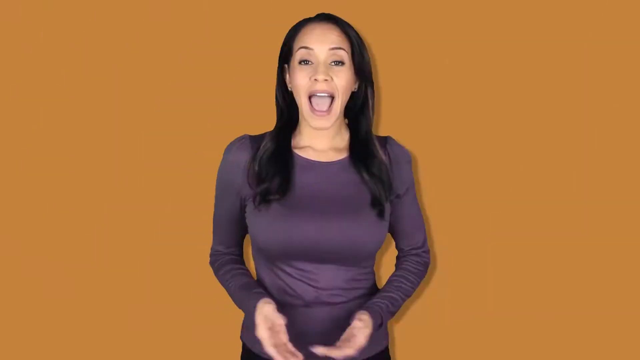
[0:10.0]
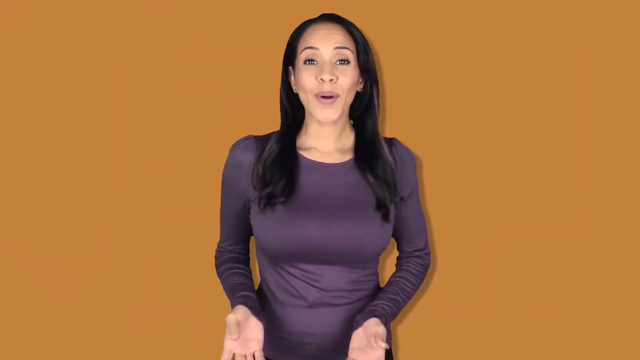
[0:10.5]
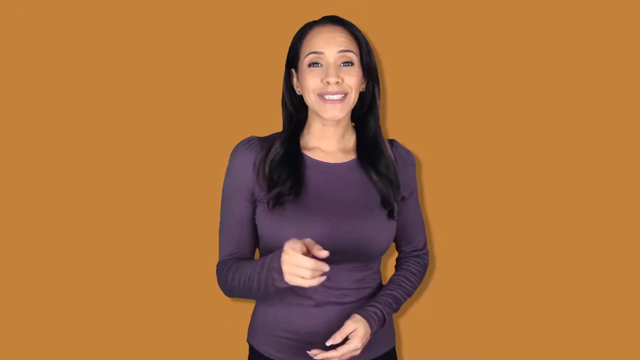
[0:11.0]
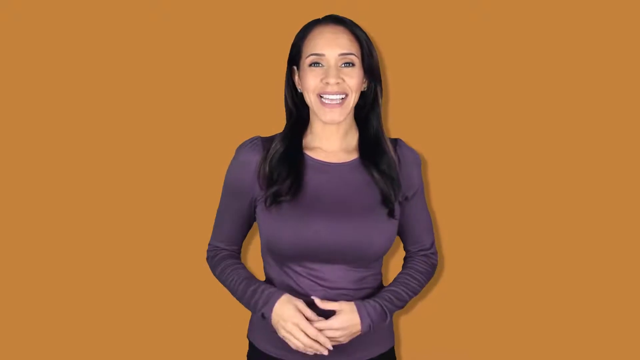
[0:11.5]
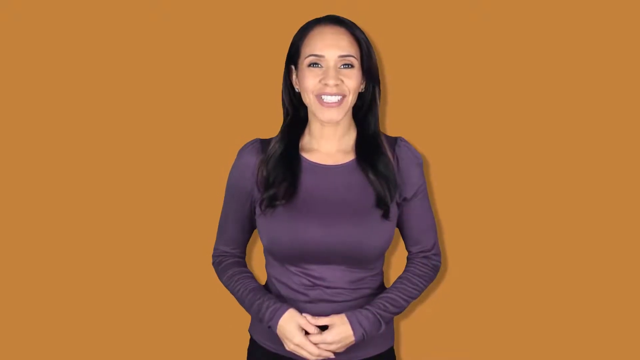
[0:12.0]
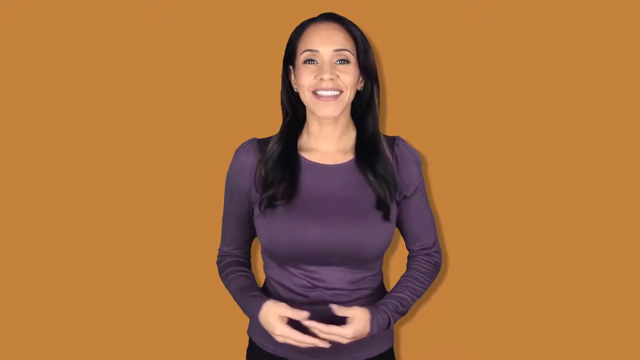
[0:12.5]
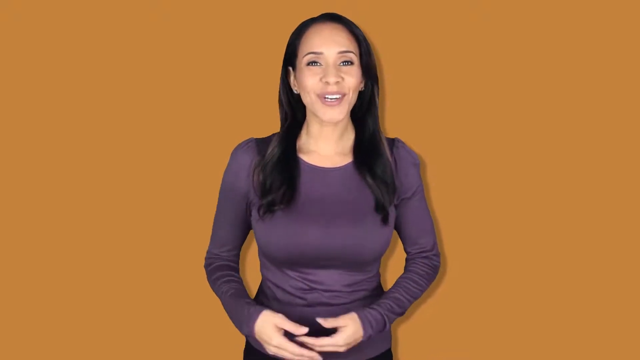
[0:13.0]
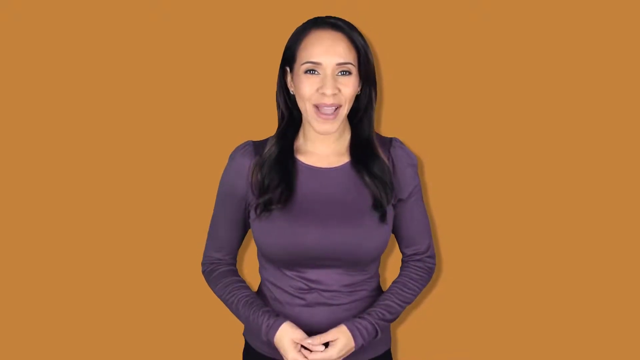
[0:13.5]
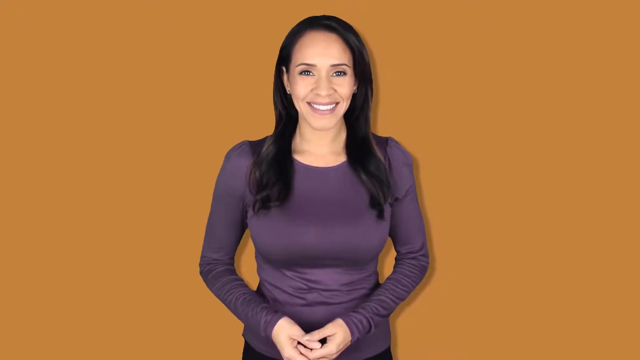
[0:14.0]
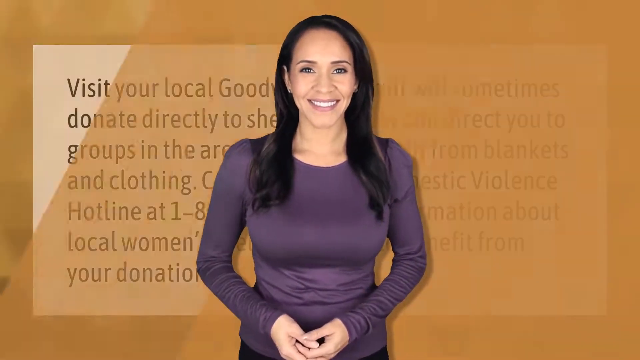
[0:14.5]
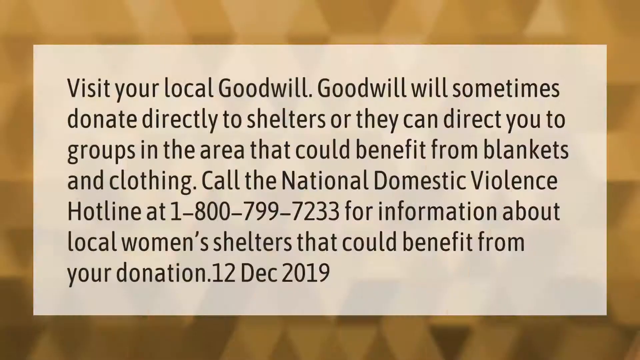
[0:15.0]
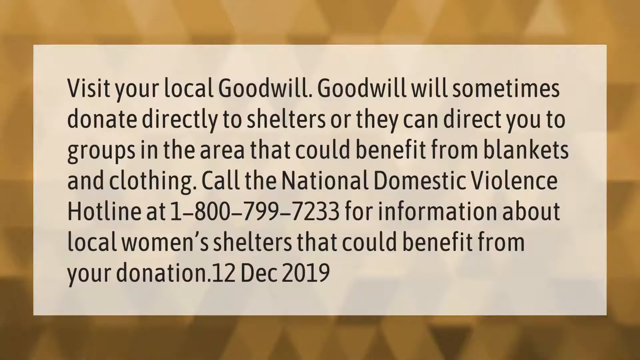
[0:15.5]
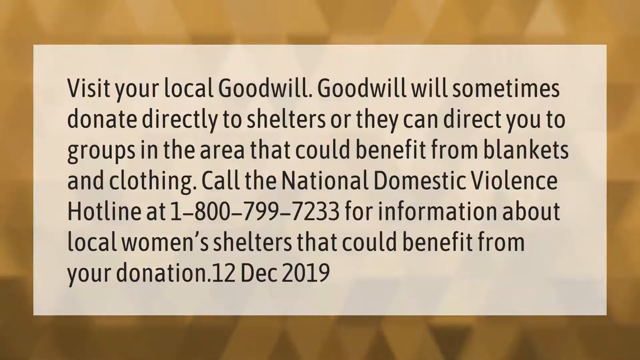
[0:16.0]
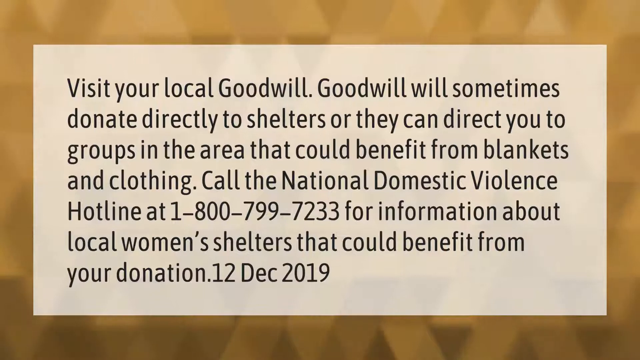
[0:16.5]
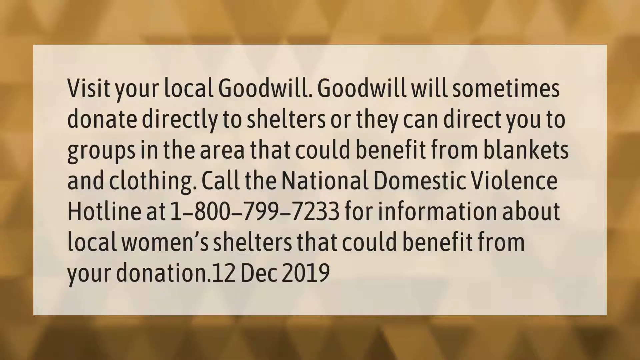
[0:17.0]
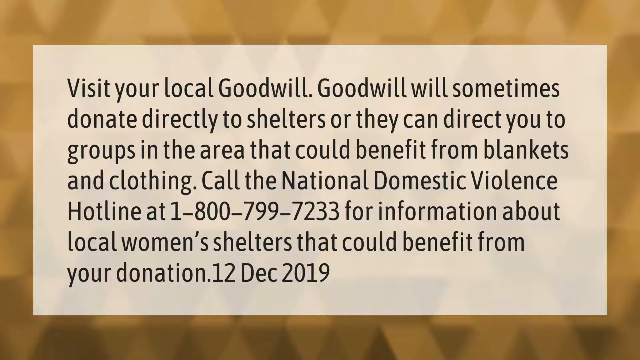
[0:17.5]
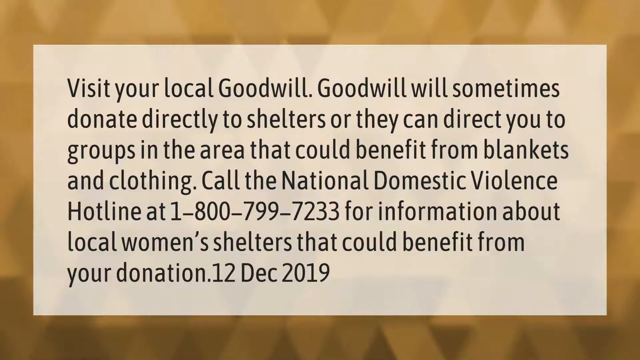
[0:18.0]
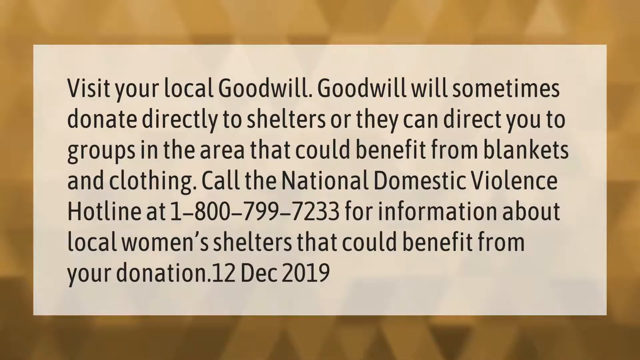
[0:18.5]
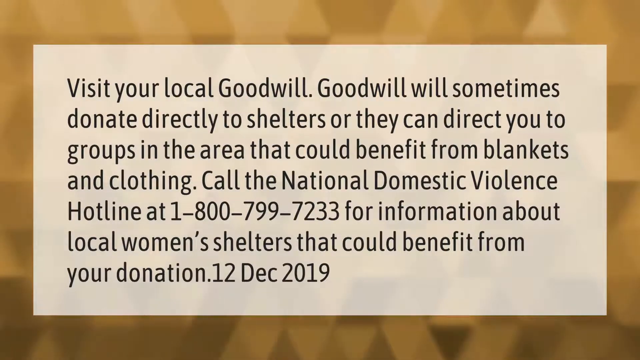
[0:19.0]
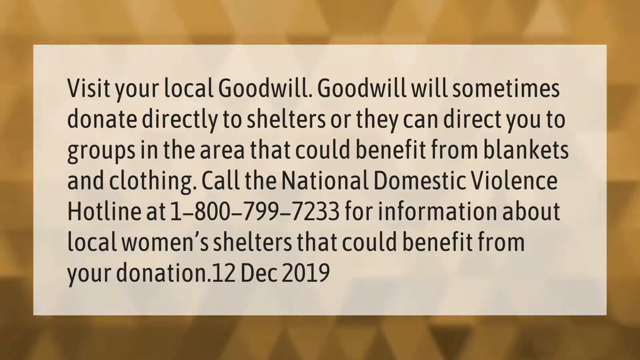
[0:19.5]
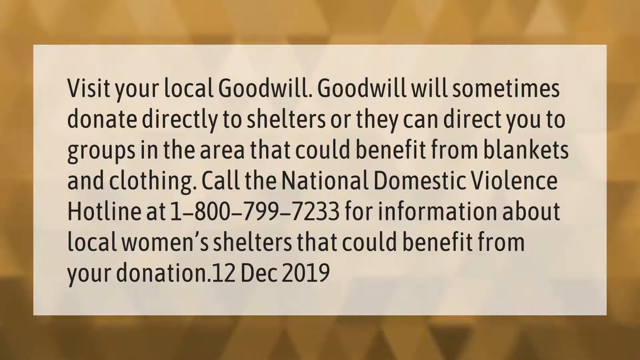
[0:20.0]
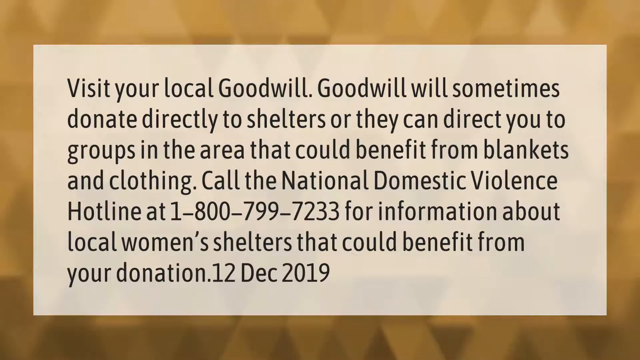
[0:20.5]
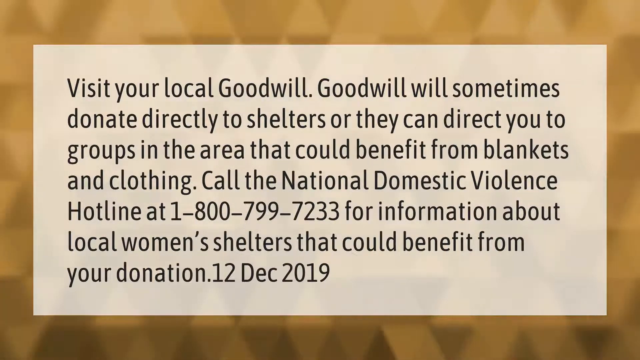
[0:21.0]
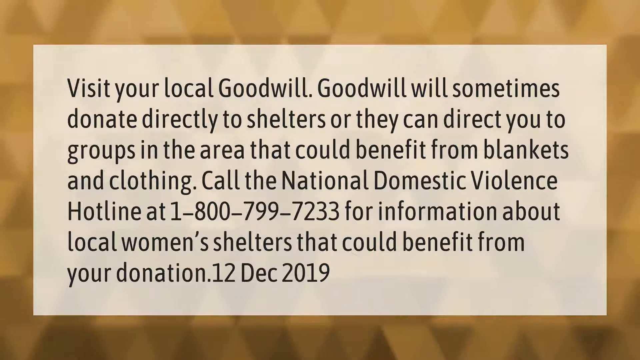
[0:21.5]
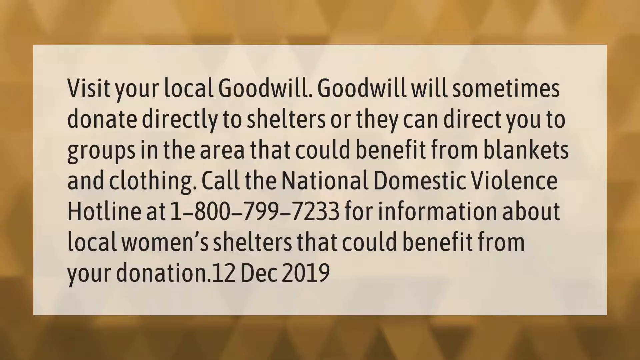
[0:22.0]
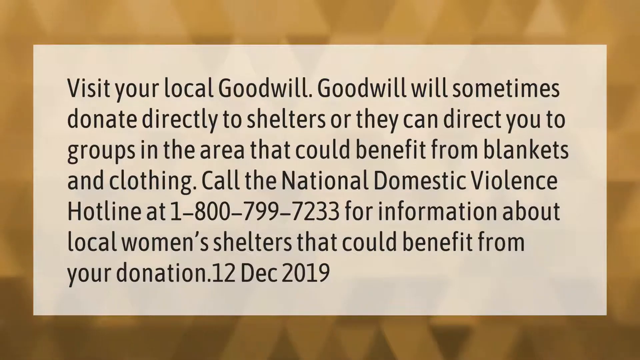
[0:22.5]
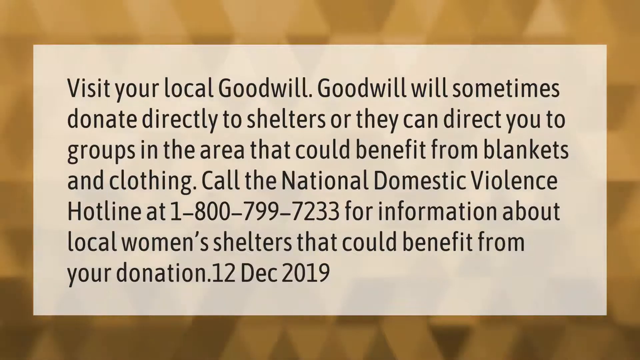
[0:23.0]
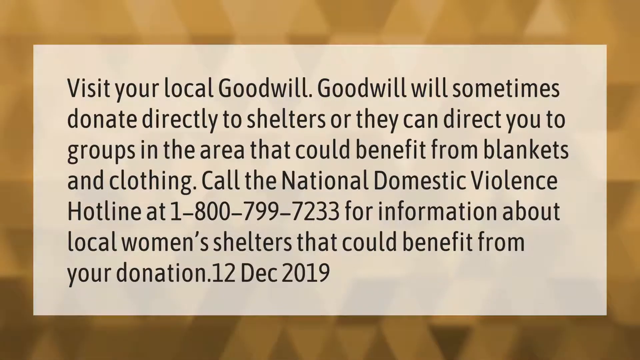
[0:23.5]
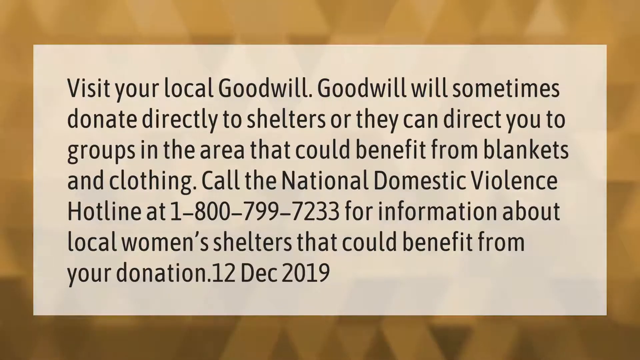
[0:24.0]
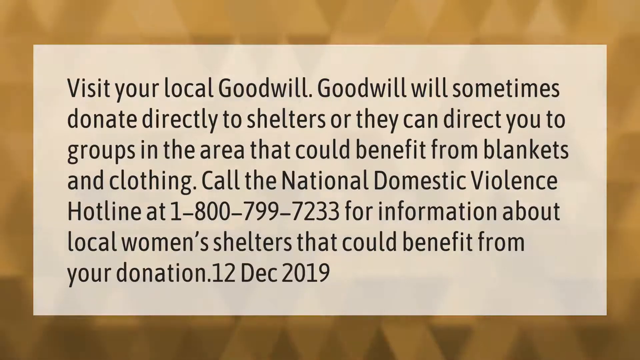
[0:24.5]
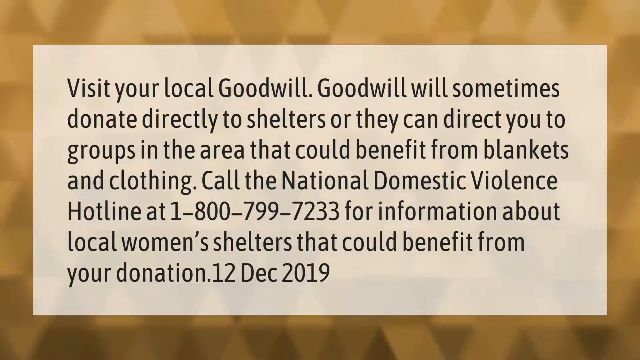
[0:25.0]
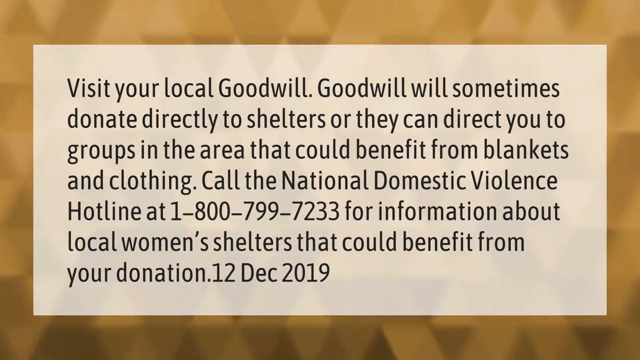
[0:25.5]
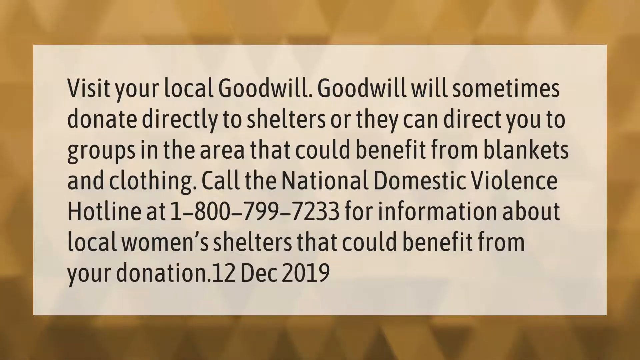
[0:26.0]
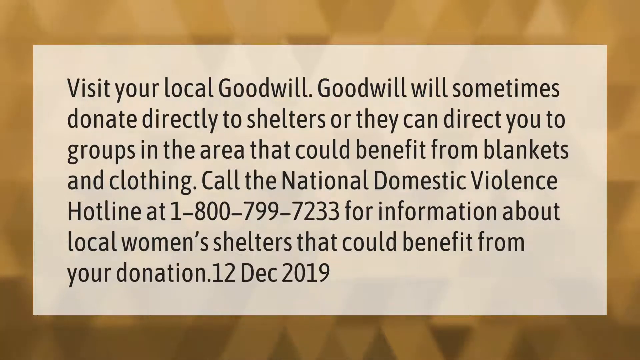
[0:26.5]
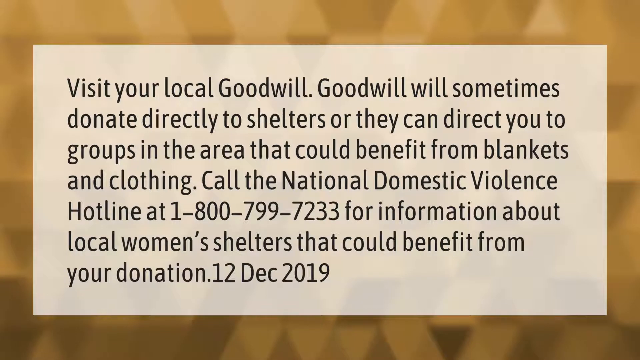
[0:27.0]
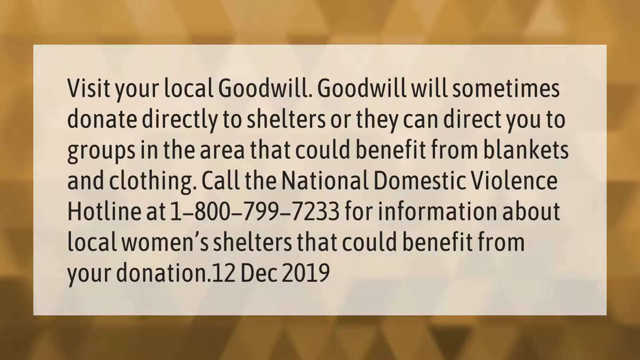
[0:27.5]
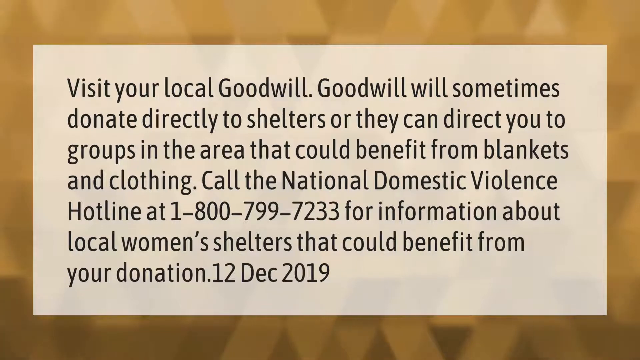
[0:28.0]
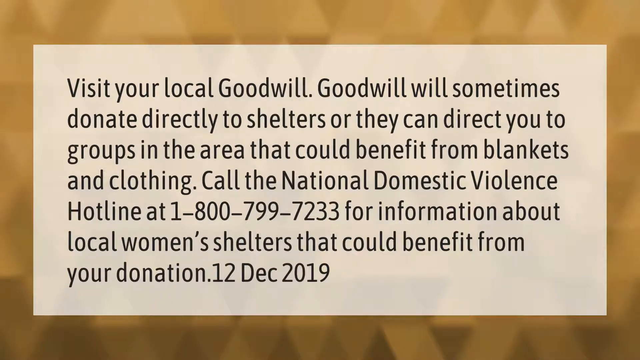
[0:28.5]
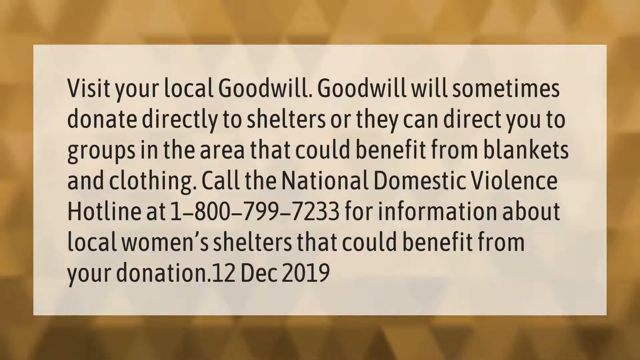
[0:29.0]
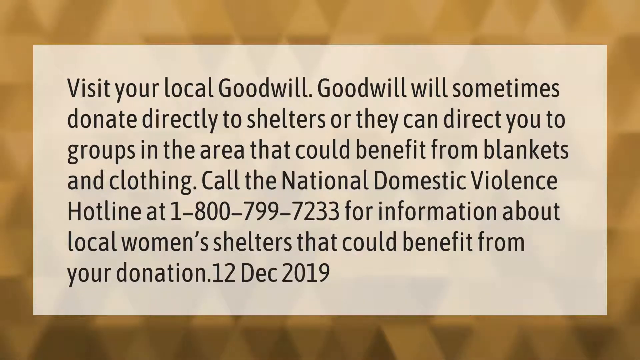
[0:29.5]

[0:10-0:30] A woman with long brown hair and a purple shirt stands behind a brown background, speaking and smiling, and points at the camera. The scene then changes to text reading "visit your local Goodwill Goodwill will sometimes donate directly to shelters or they can direct you to groups in the area that could benefit from blankets and clothing call the National Domestic Violence hotline at 1-800-799-7233 For information of our local women's shelter that could benefit from your donation", with the date December 12th, 2019.